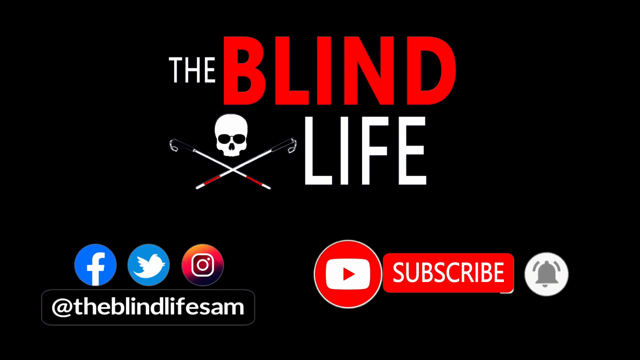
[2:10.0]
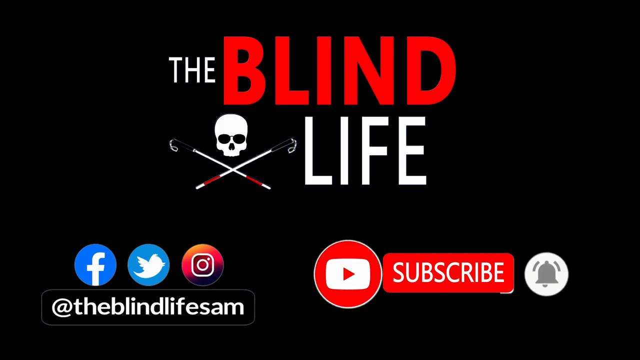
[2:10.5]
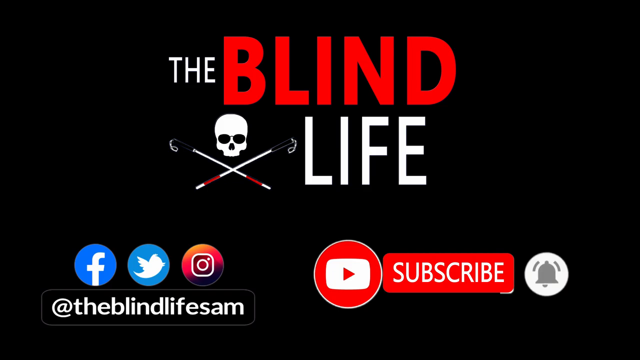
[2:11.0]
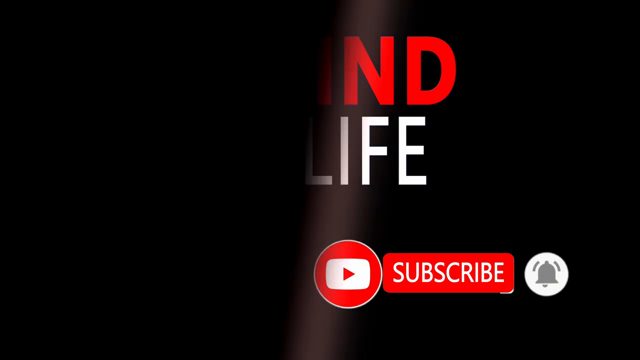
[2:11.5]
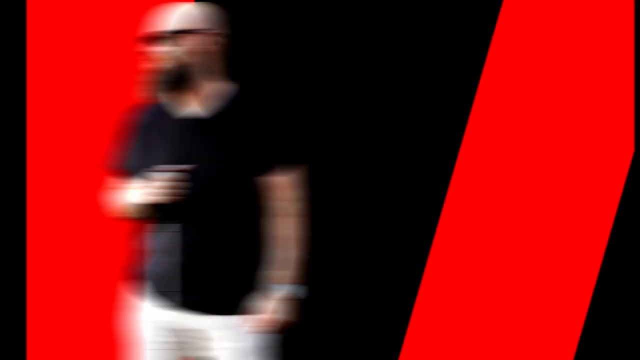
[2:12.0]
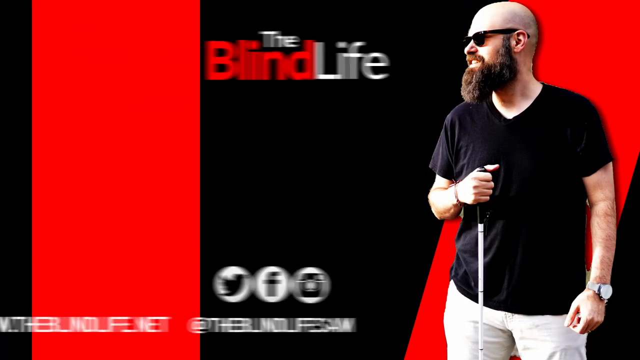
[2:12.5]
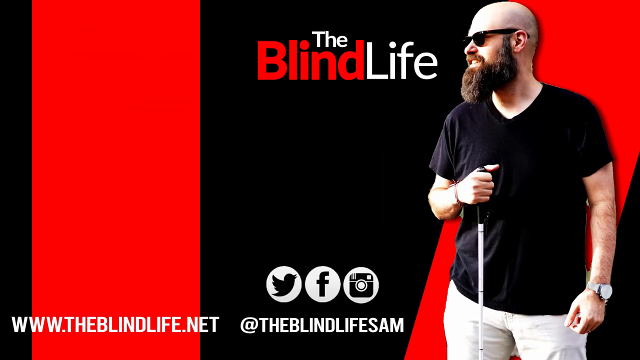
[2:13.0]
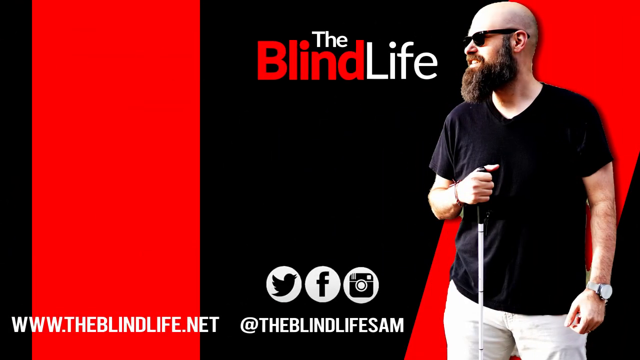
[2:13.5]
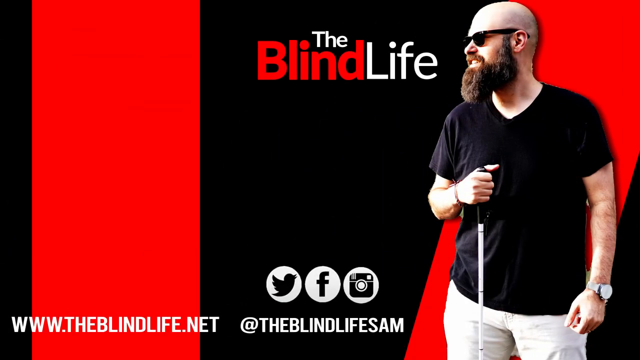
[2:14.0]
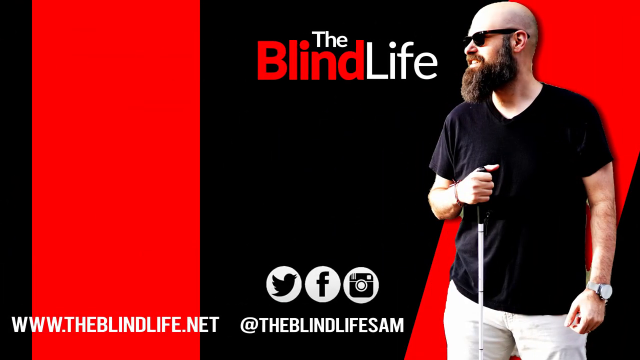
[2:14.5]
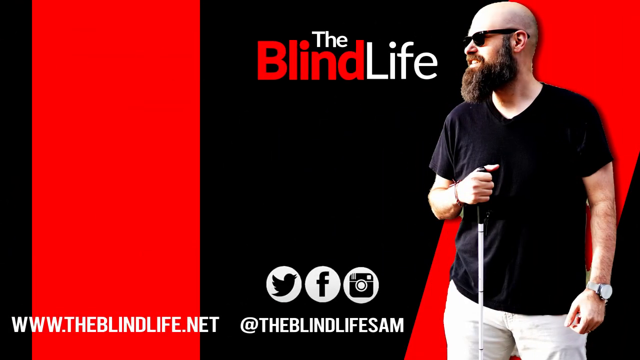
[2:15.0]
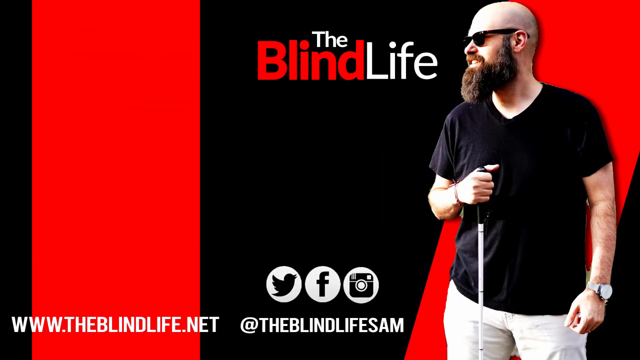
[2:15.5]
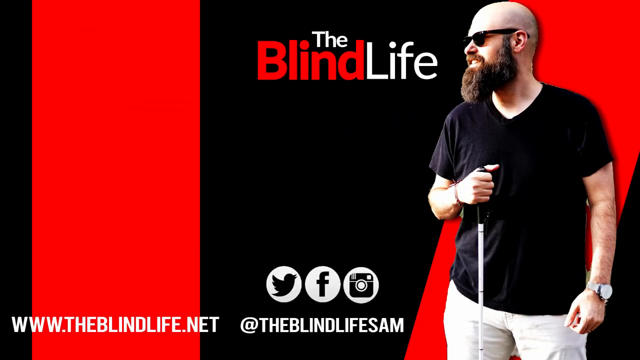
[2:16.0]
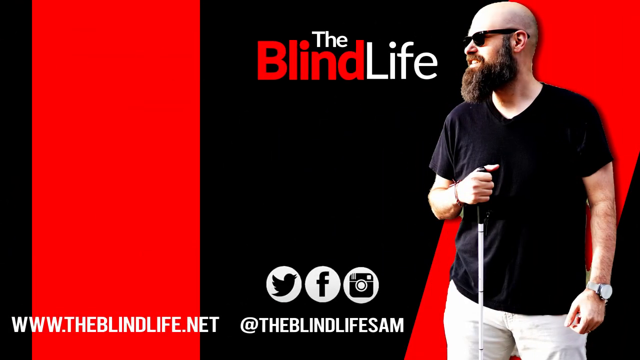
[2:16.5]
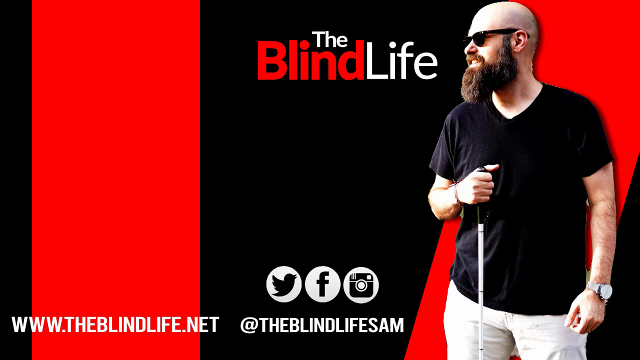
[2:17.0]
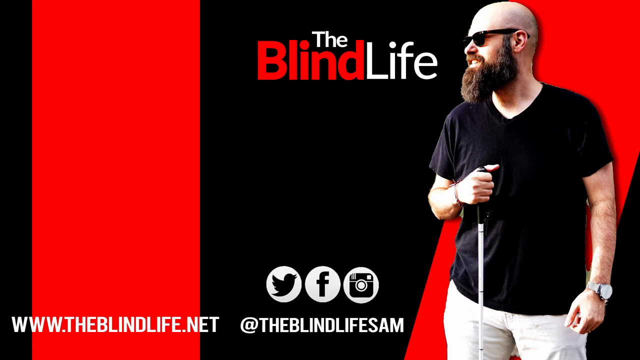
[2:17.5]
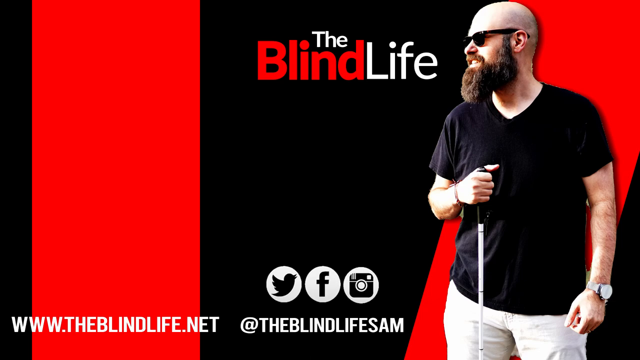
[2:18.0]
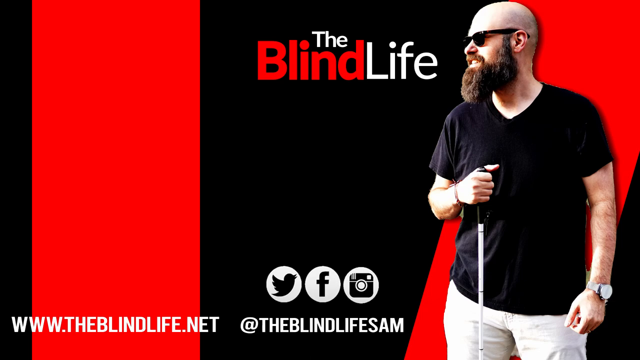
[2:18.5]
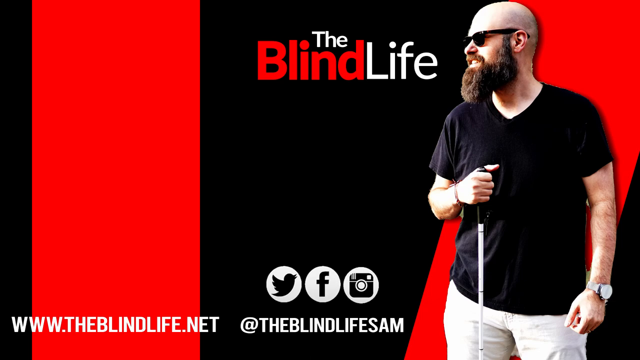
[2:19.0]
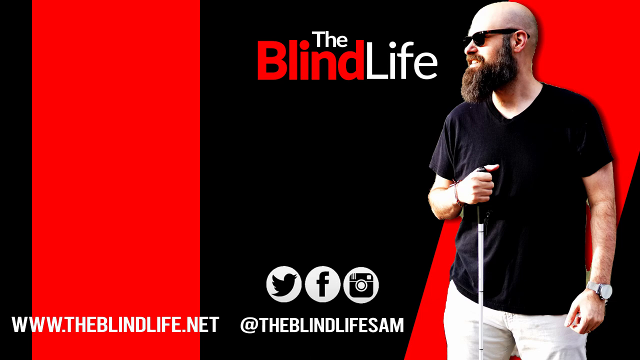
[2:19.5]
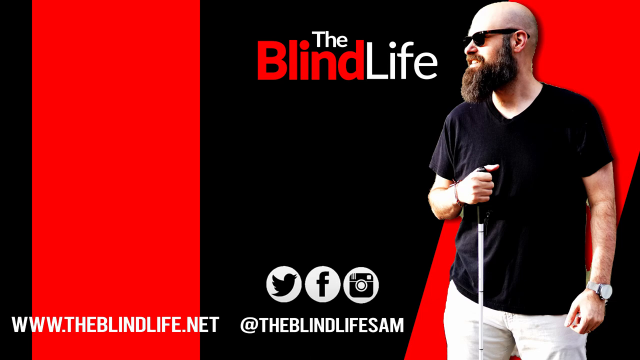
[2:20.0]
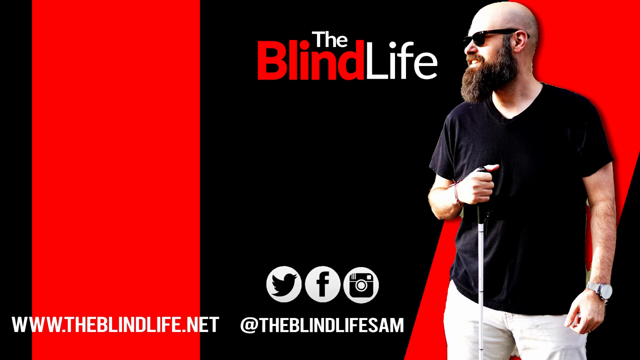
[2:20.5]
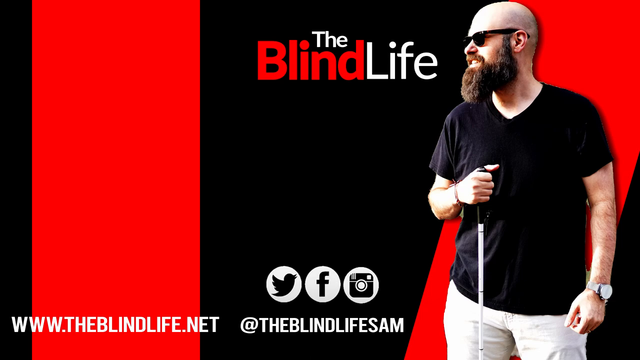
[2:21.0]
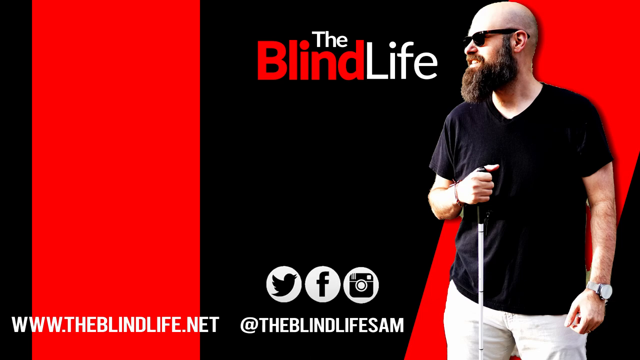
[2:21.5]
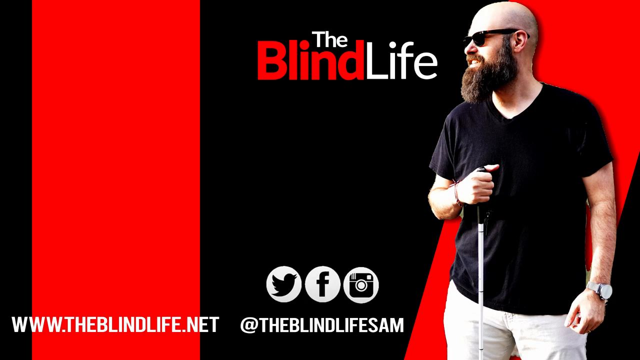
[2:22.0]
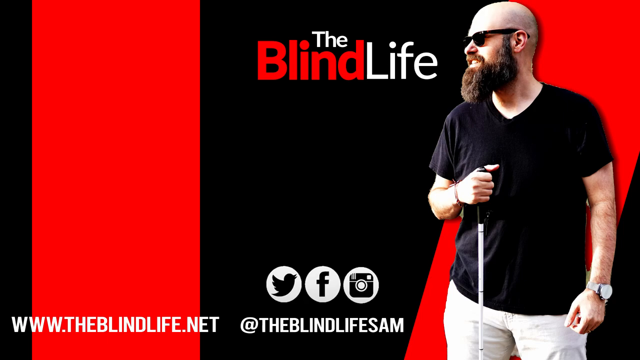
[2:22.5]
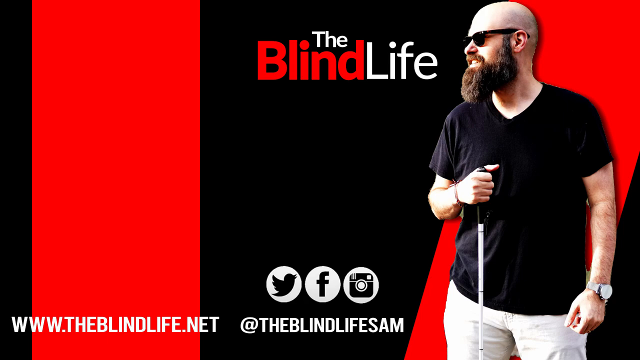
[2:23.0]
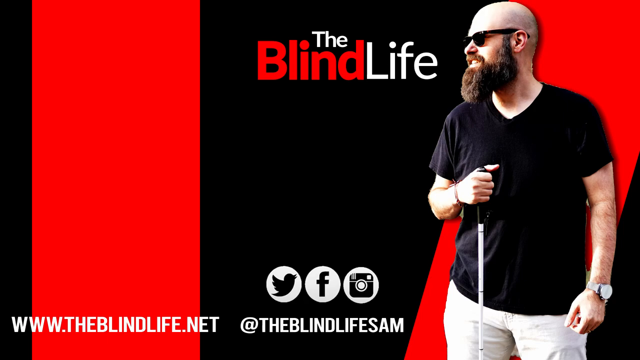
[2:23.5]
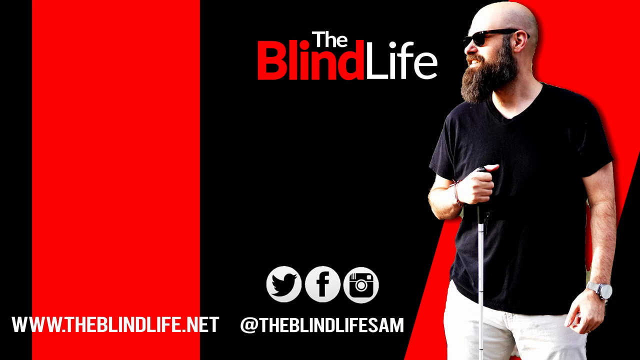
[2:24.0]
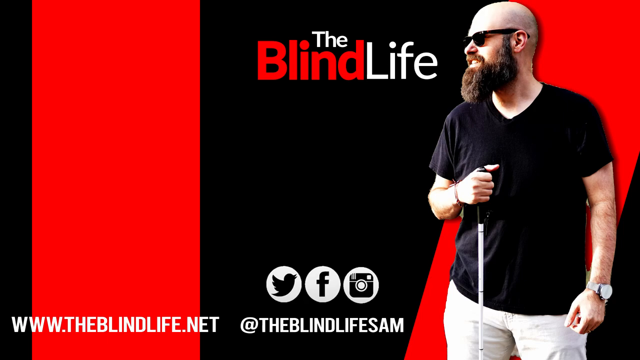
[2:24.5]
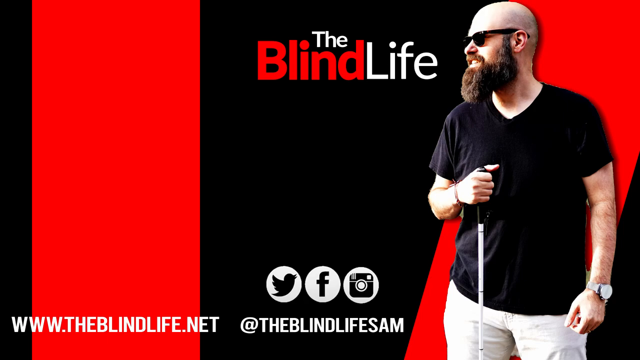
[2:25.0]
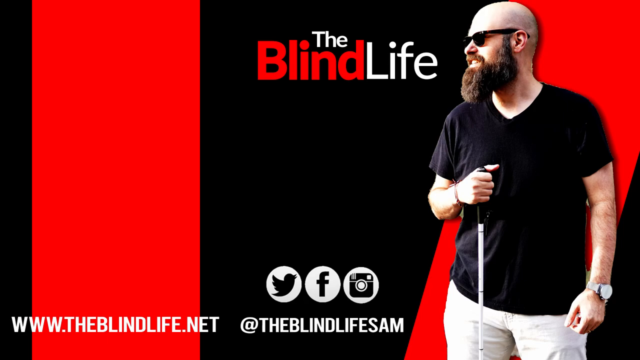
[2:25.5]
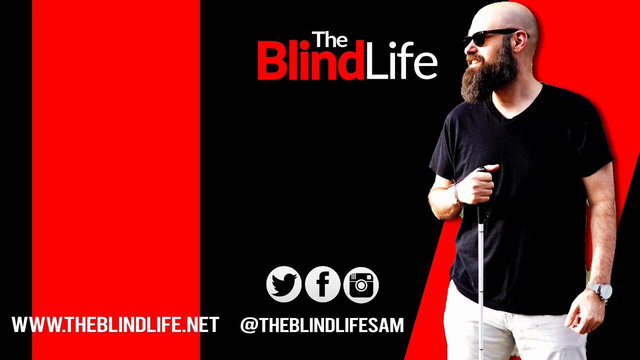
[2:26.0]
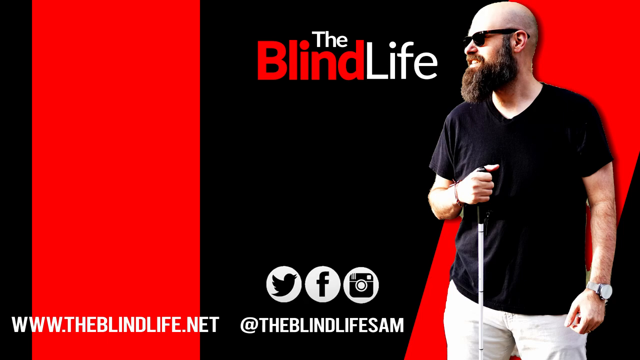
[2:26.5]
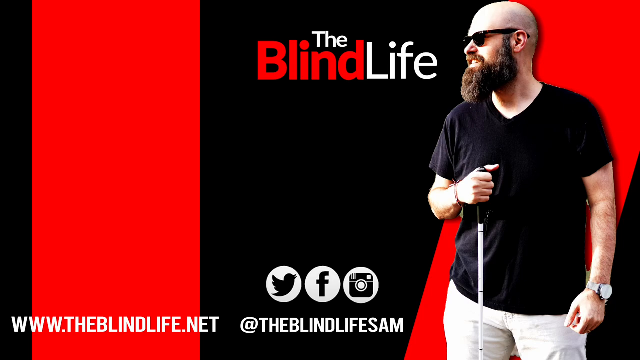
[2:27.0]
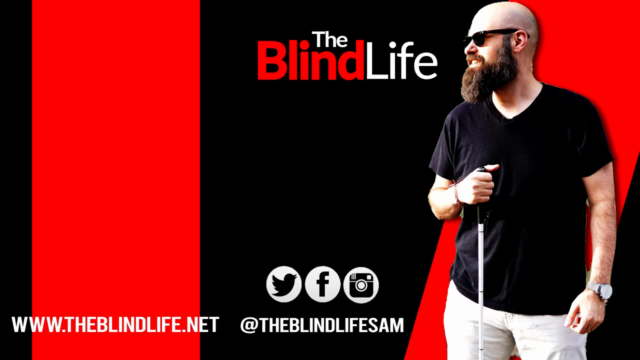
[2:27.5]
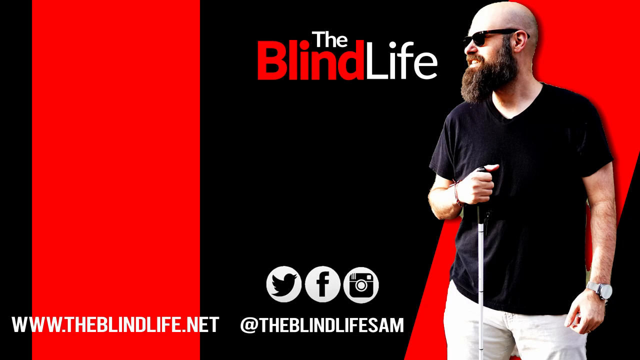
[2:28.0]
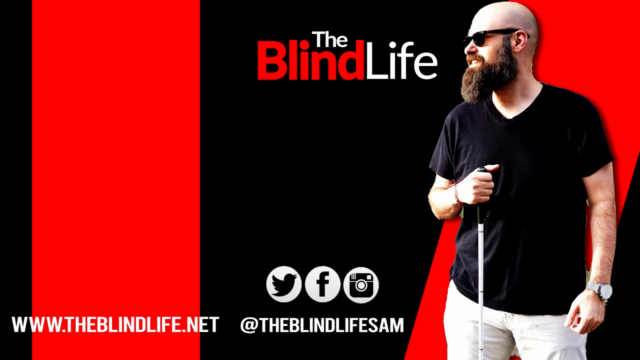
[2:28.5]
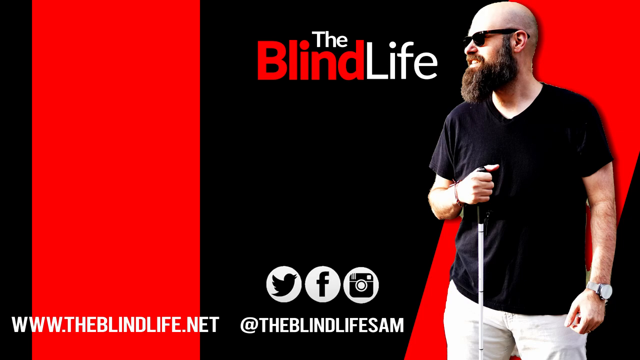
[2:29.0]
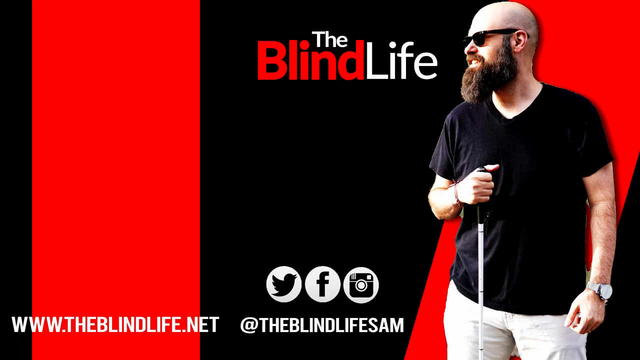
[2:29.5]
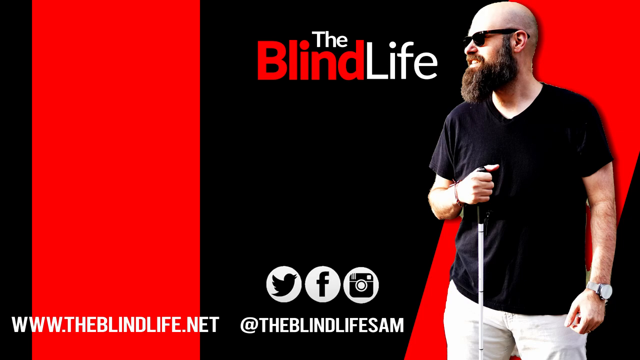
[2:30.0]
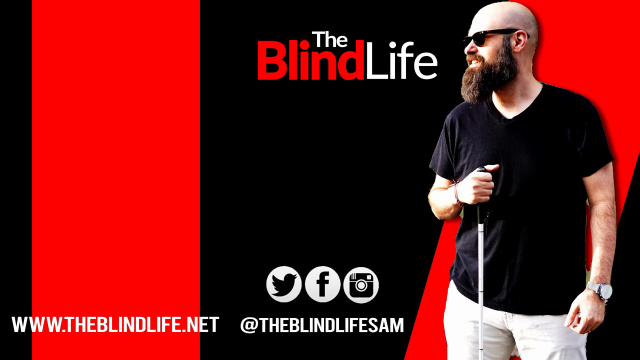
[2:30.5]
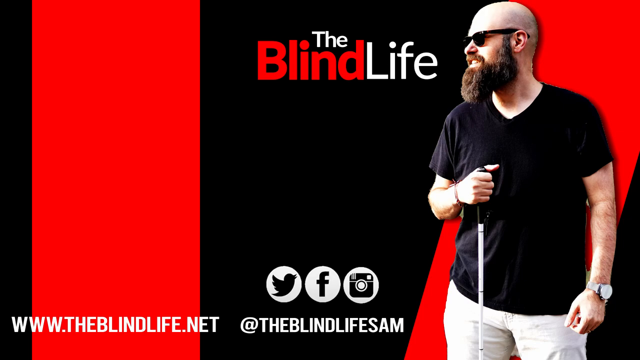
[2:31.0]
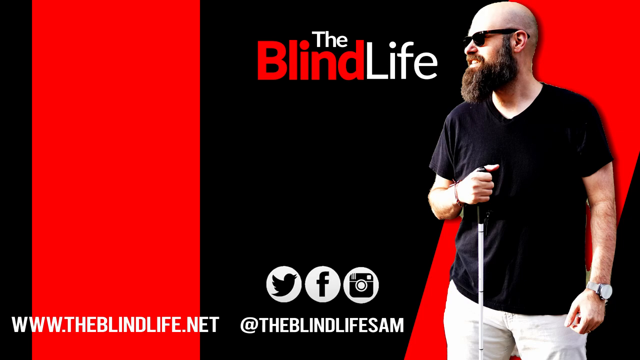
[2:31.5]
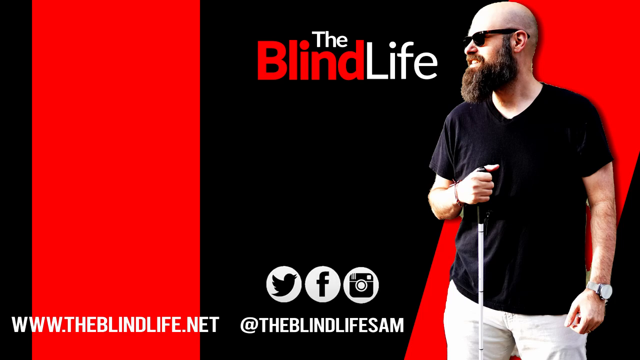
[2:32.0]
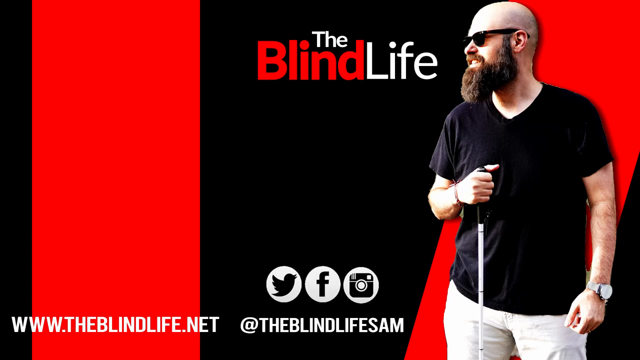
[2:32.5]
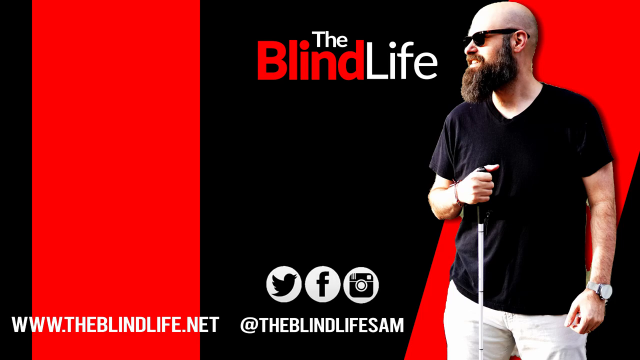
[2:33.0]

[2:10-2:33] The page of logos animates into a photograph of a man, presumably Sam: the bald, bearded man seen earlier. In this photo he looks to his right, toward the left-hand side of the frame. He wears a black v-neck T-shirt and a large white watch, and holds a cane, apparently to show that he is visually impaired. The Blind Life logo is at the top middle of the screen, and at the bottom of the screen are logos for Twitter, Facebook and Instagram. Two captions run across the bottom: "www.theblindlife.net" and "@theblindlifesam". This stays on screen for several seconds.